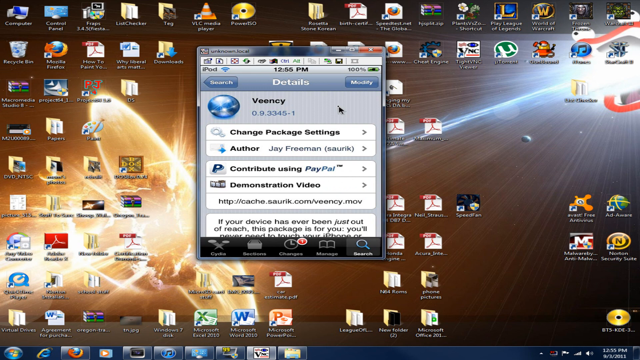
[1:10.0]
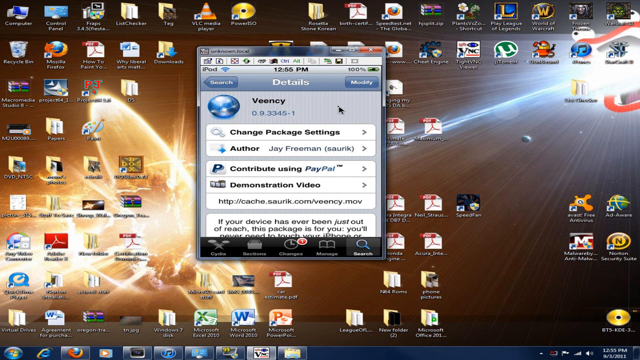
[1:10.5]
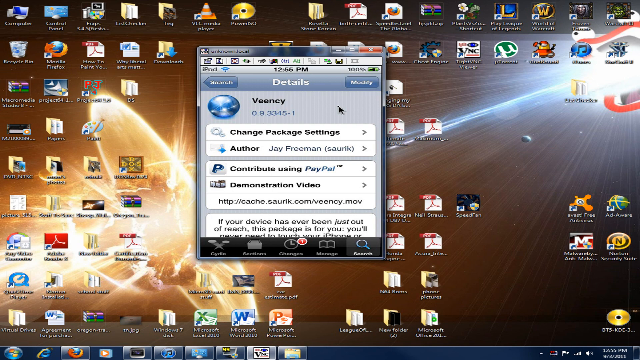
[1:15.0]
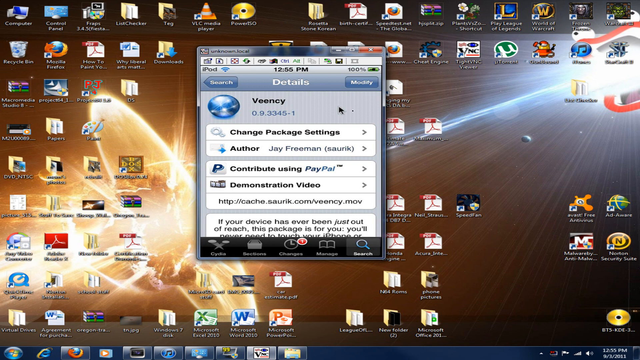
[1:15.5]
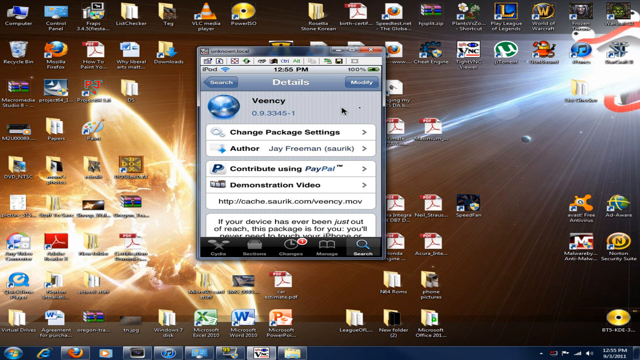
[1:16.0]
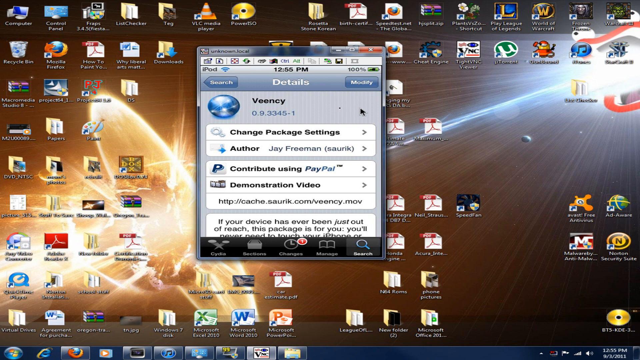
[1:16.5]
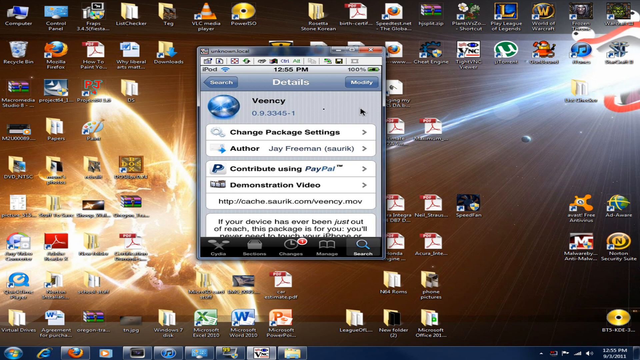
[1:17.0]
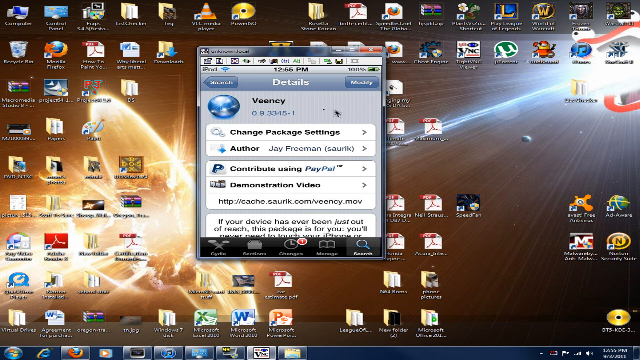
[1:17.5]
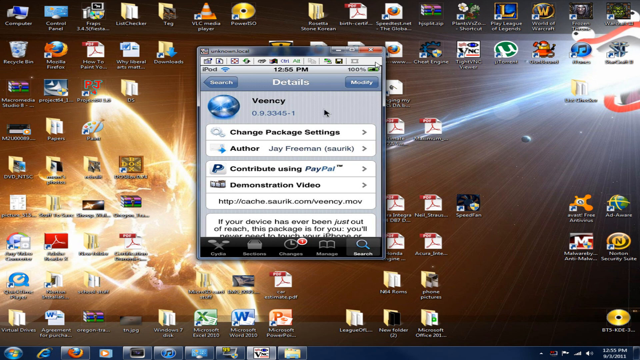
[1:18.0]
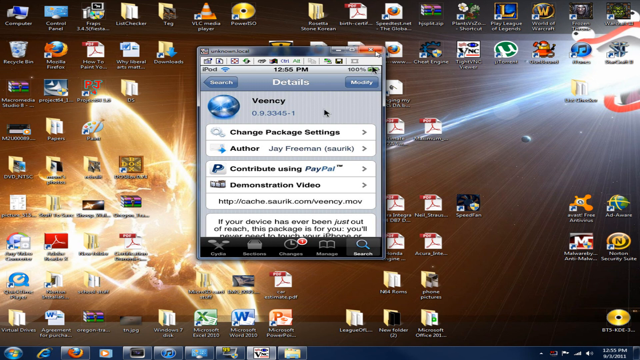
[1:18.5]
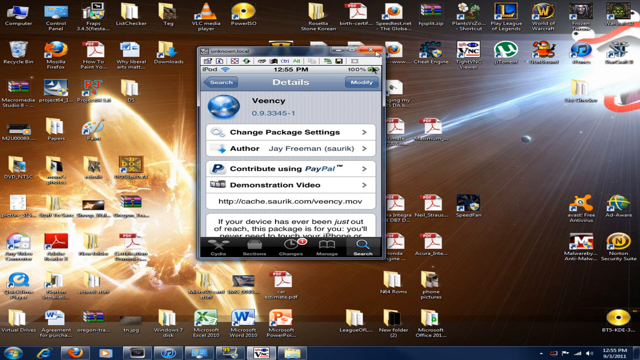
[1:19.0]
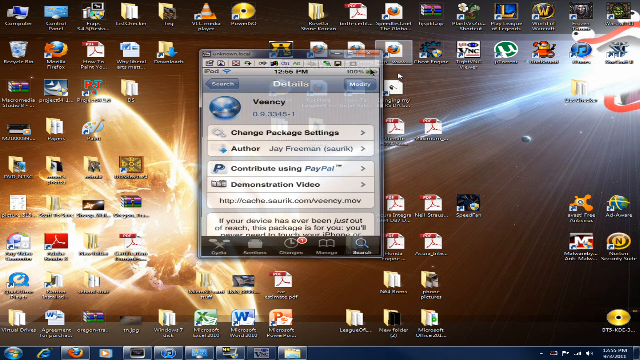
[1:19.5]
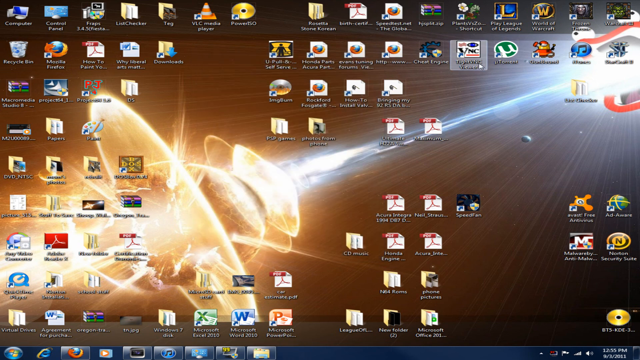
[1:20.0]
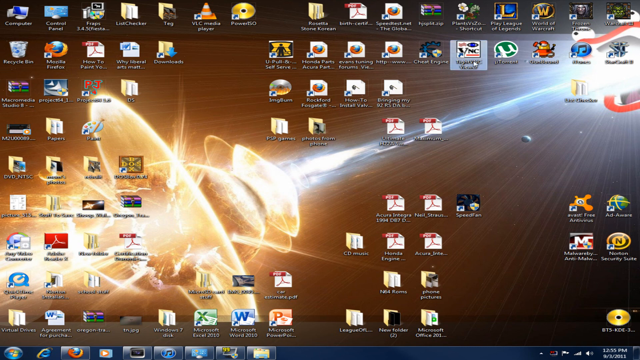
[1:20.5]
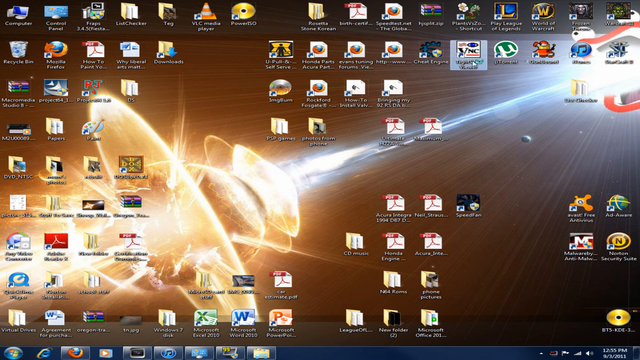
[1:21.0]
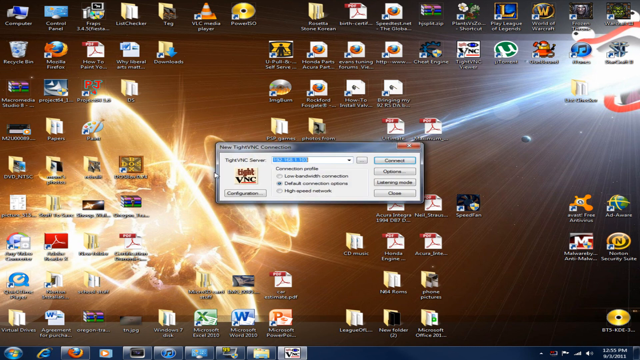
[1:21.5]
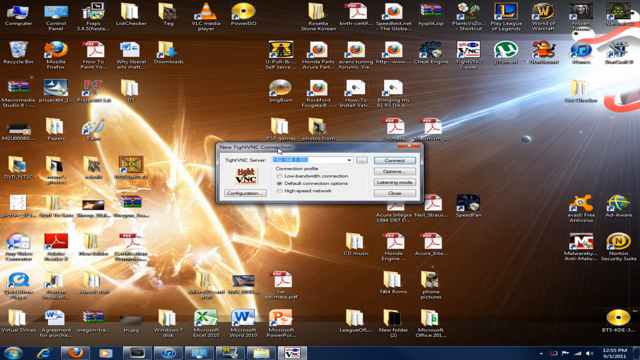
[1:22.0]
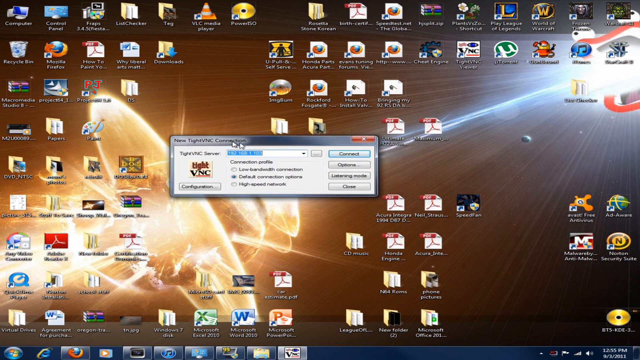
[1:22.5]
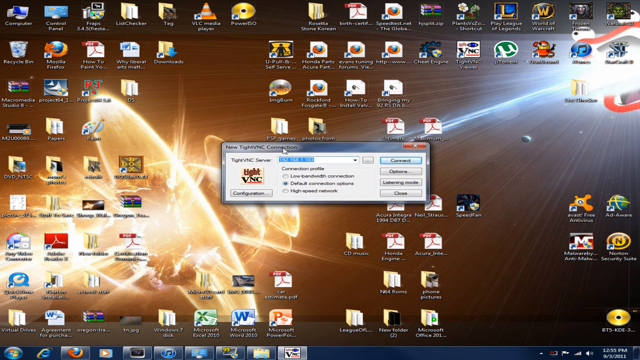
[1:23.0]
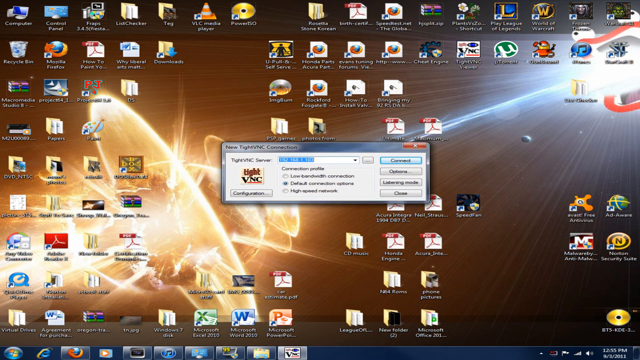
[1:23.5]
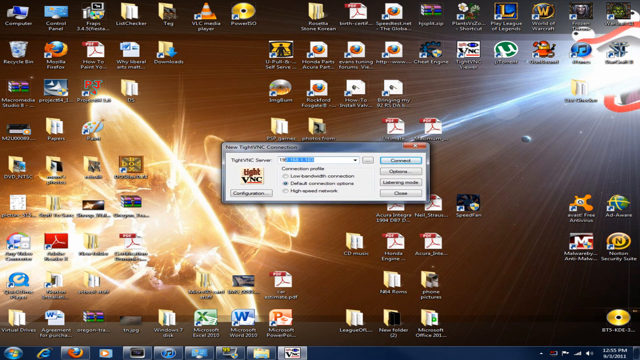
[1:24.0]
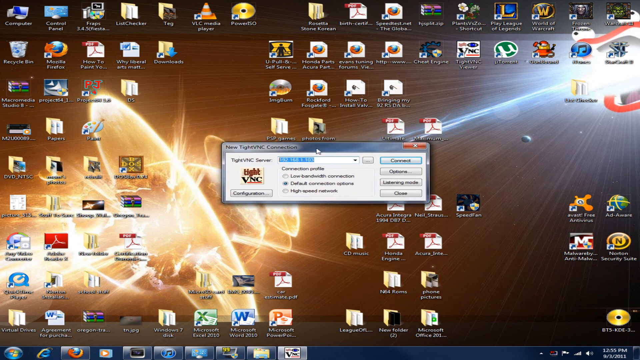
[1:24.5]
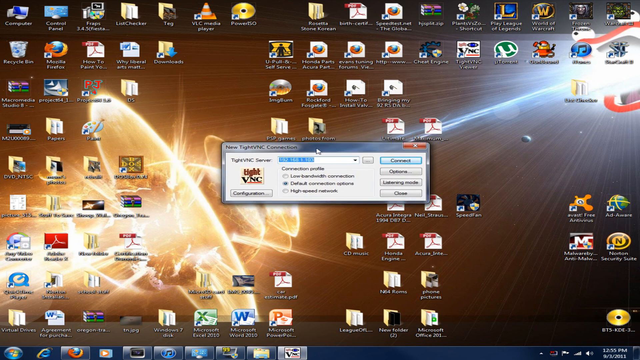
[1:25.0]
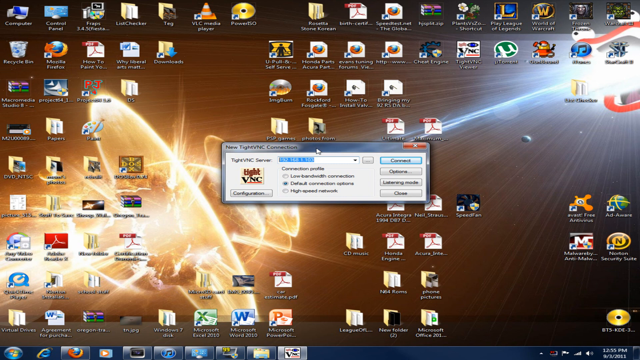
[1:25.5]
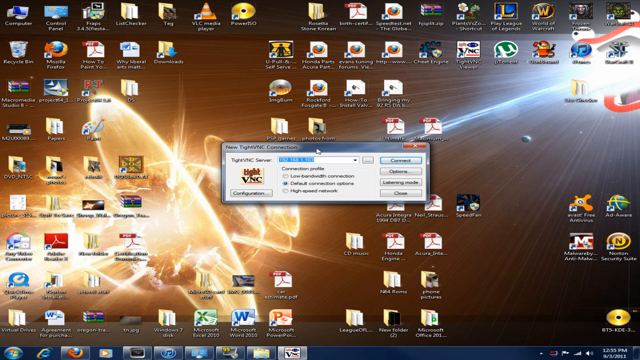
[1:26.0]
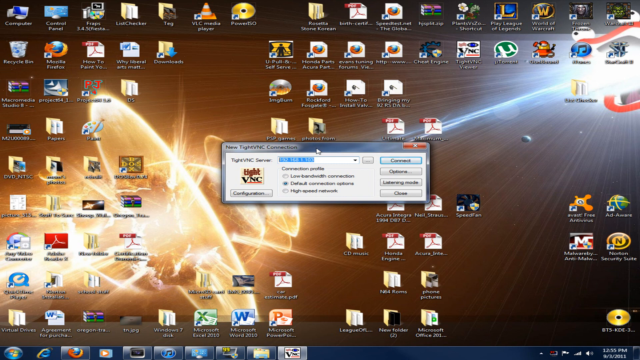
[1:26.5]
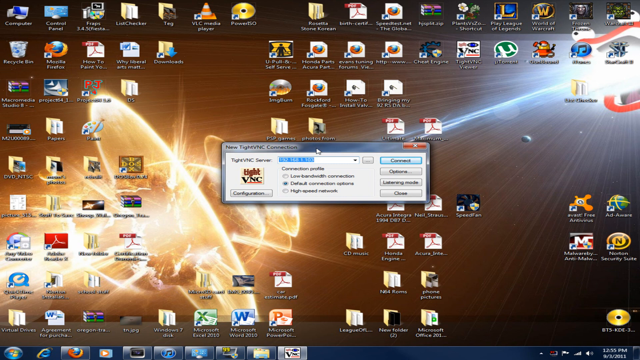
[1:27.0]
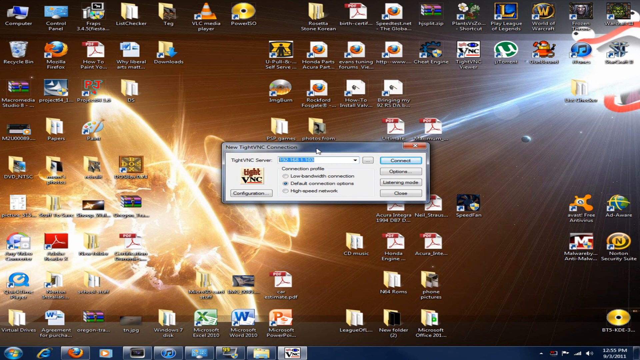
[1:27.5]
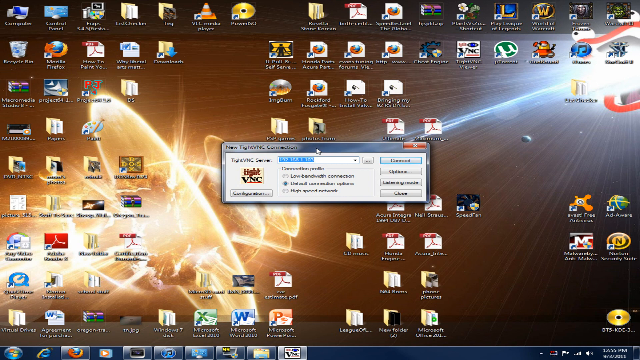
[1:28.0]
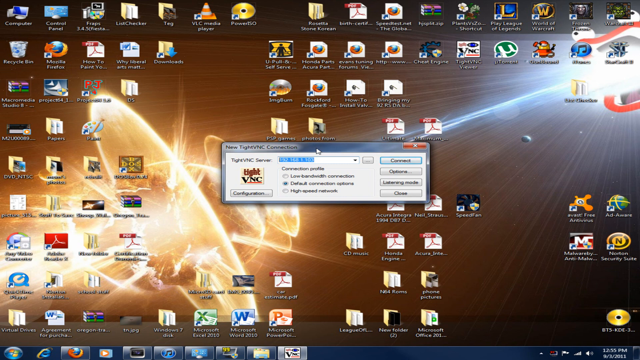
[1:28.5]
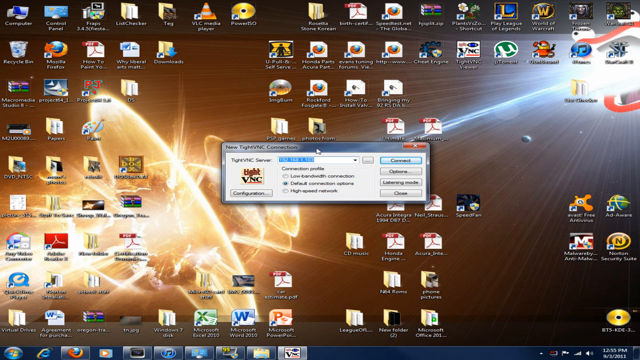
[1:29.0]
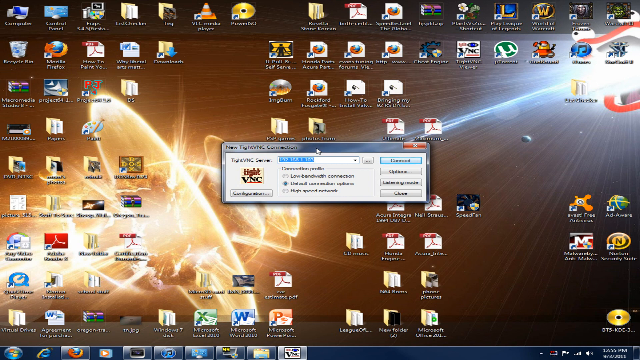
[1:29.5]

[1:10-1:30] A computer screen has an outer space wallpaper showing two planets colliding, with bright yellow exploding out of and around the planets. There are about 50 to 60 different icons on the screen. After the person has hit one of the icons, a small pop-up window is in the middle of the screen. At its very top it says "details", and inside is a blue circle with the word "Veency" beside it. Underneath are four separate tabs as options: "change package settings", "author Jay Freeman", "contribute using PayPal" and "demonstration video". A pointer comes onto the screen and X's out of the little window, and then another pop-up appears in the middle of the screen.